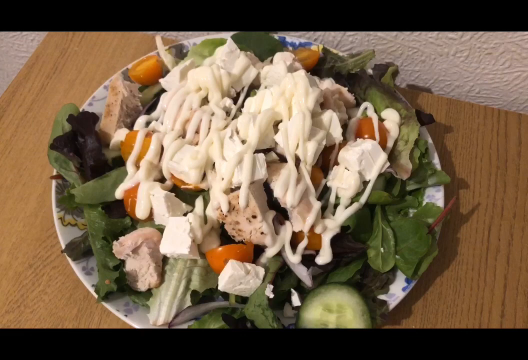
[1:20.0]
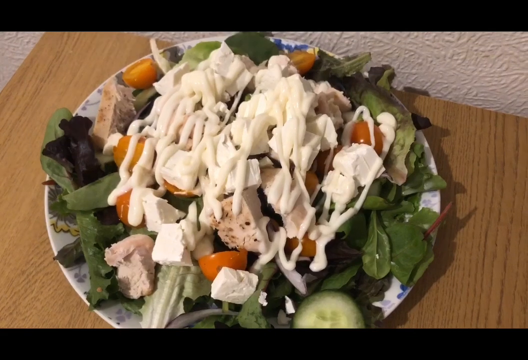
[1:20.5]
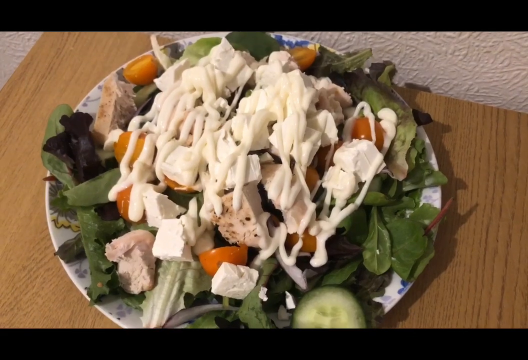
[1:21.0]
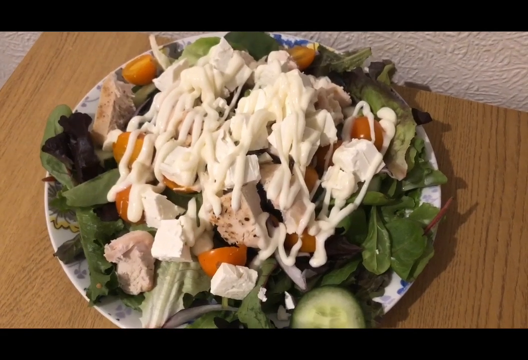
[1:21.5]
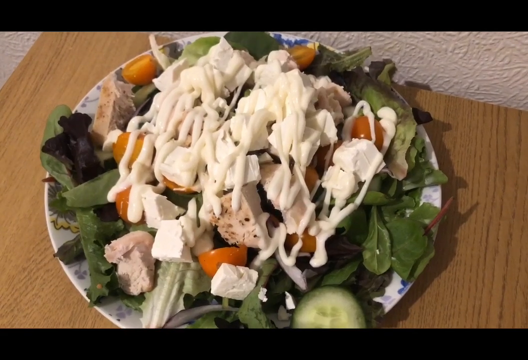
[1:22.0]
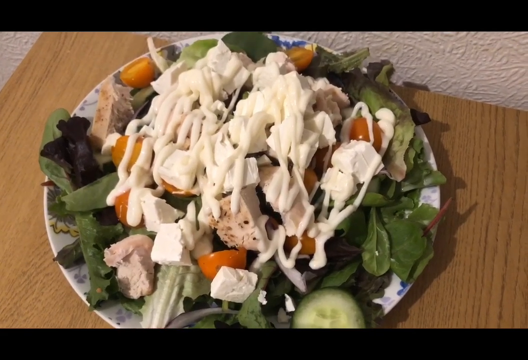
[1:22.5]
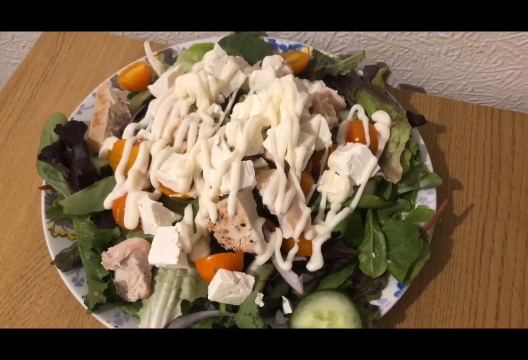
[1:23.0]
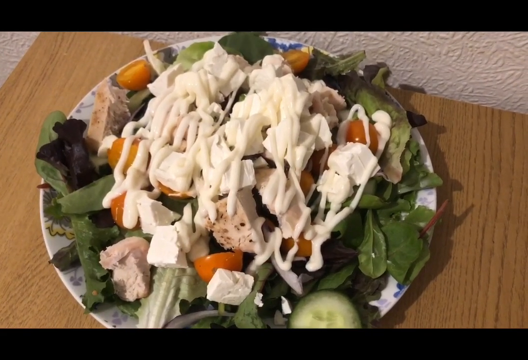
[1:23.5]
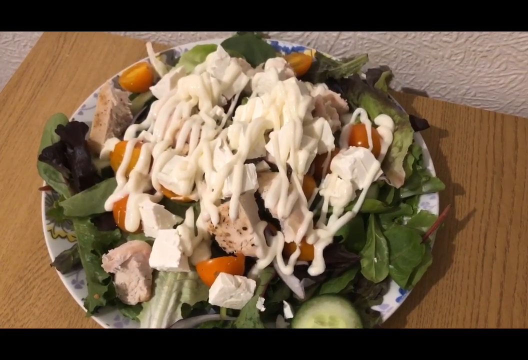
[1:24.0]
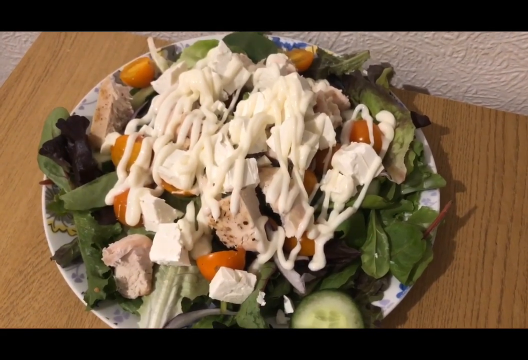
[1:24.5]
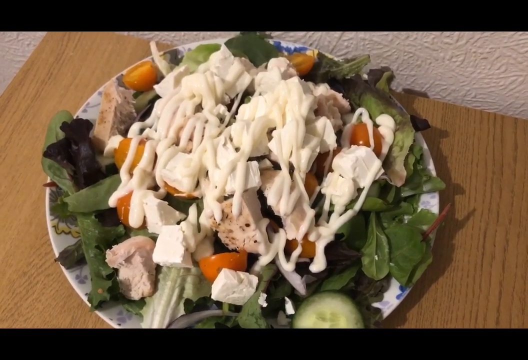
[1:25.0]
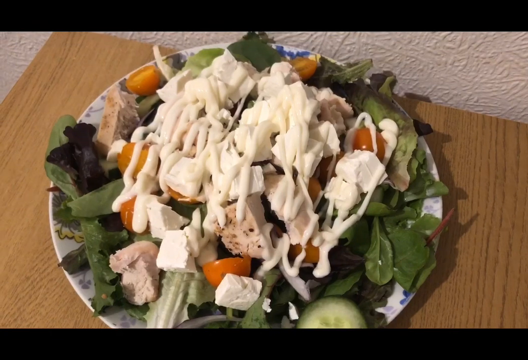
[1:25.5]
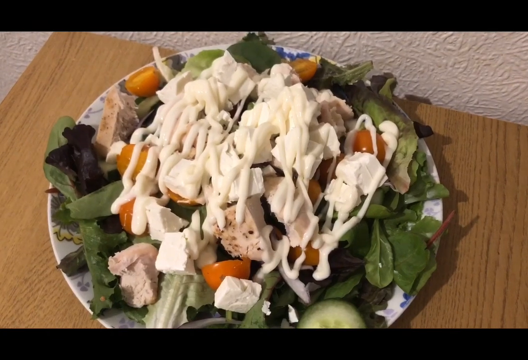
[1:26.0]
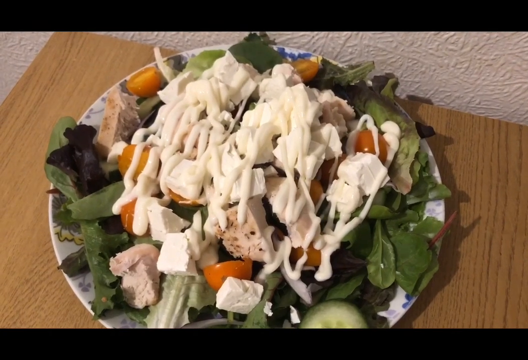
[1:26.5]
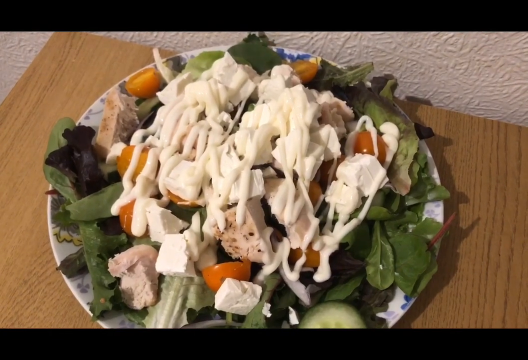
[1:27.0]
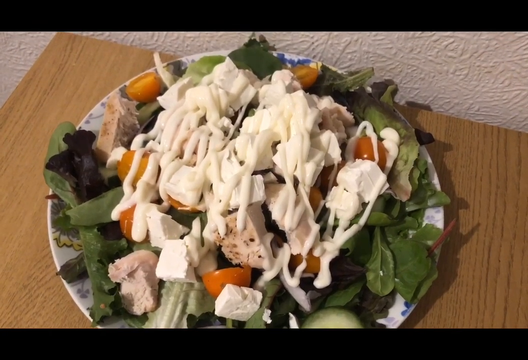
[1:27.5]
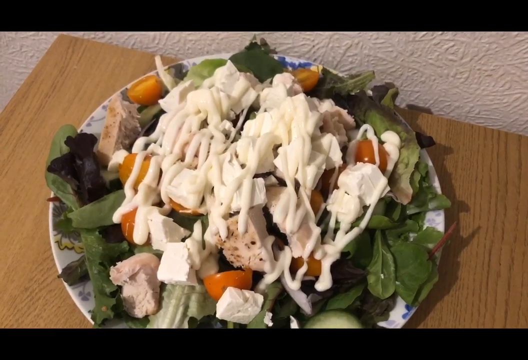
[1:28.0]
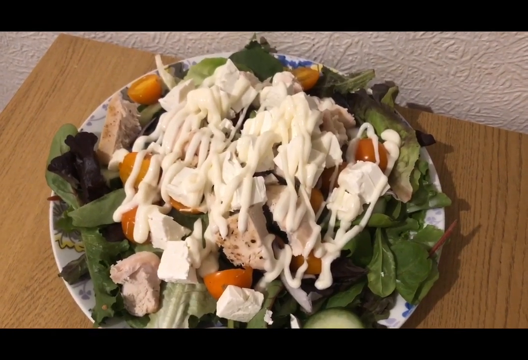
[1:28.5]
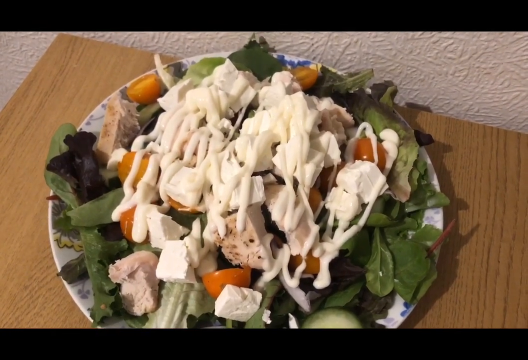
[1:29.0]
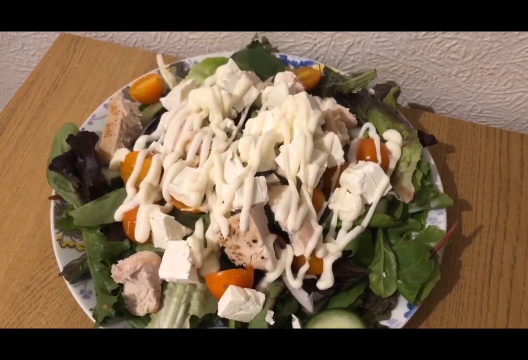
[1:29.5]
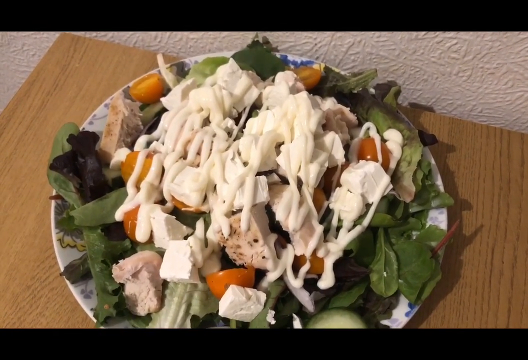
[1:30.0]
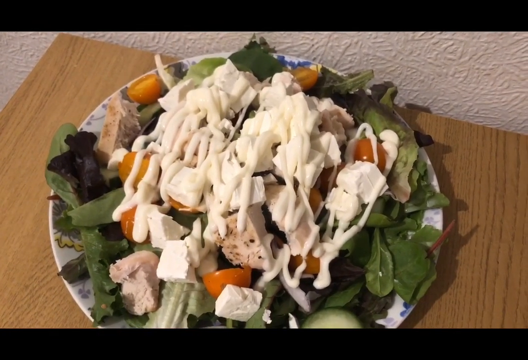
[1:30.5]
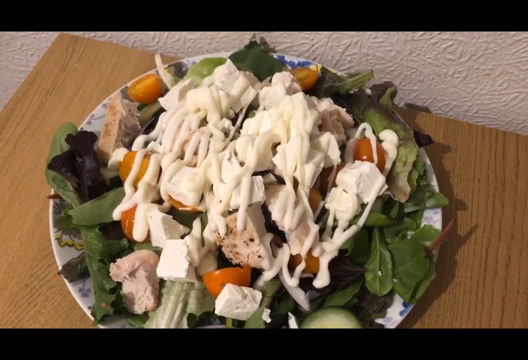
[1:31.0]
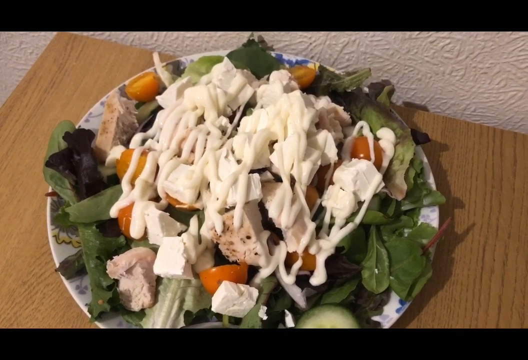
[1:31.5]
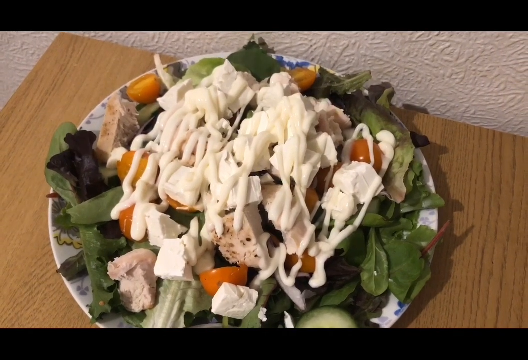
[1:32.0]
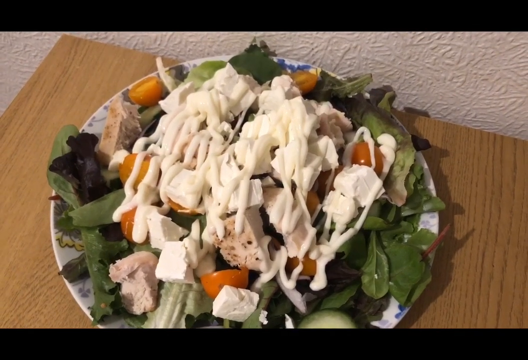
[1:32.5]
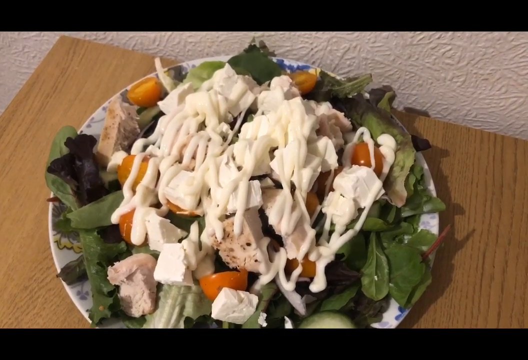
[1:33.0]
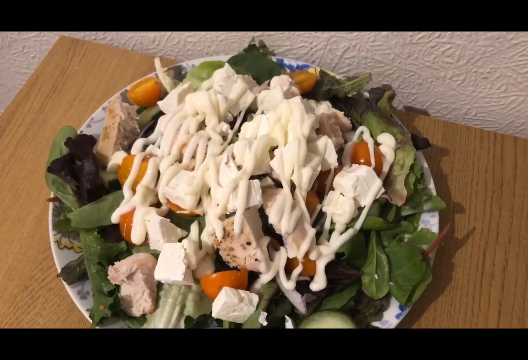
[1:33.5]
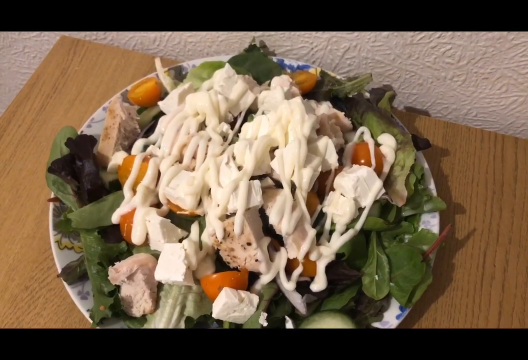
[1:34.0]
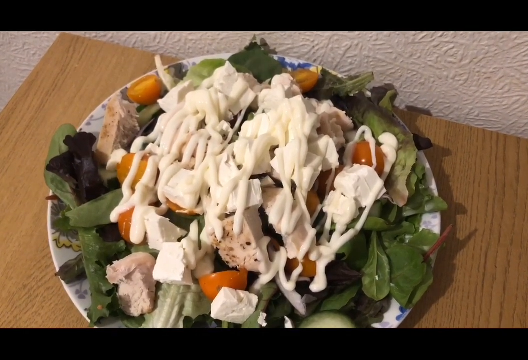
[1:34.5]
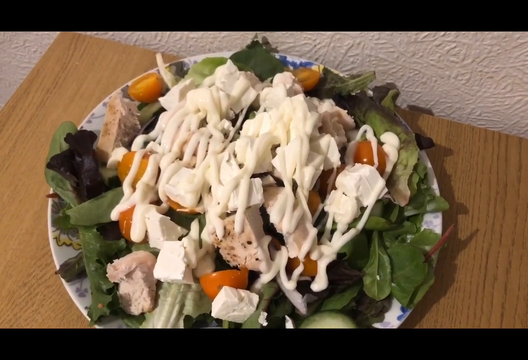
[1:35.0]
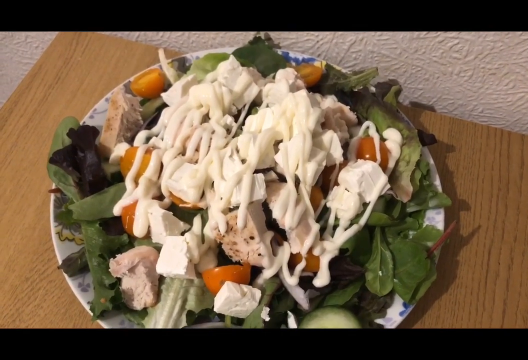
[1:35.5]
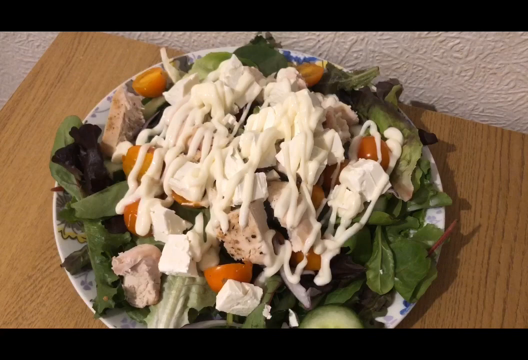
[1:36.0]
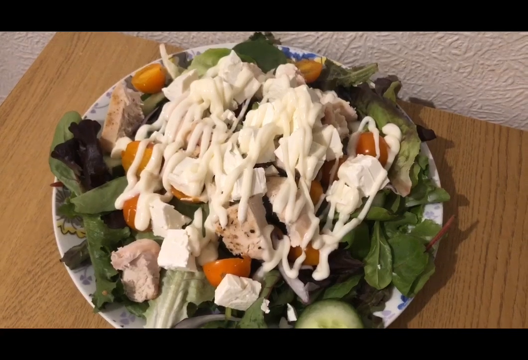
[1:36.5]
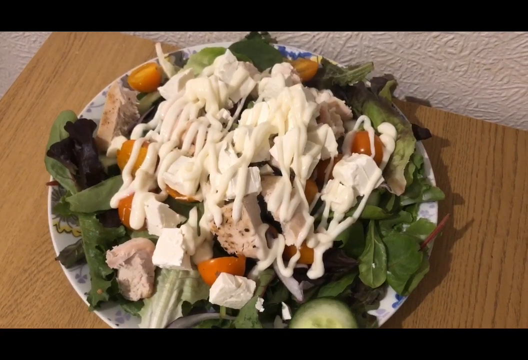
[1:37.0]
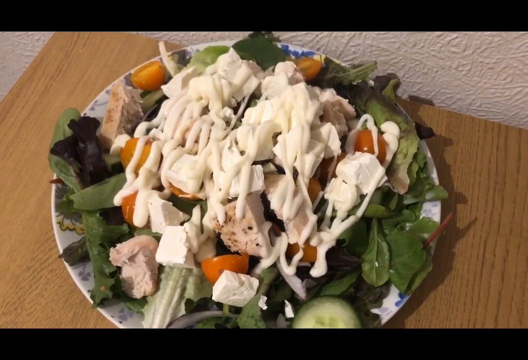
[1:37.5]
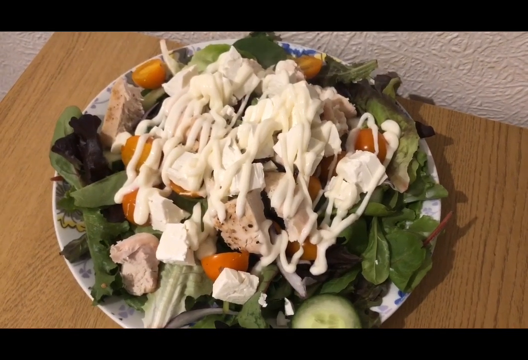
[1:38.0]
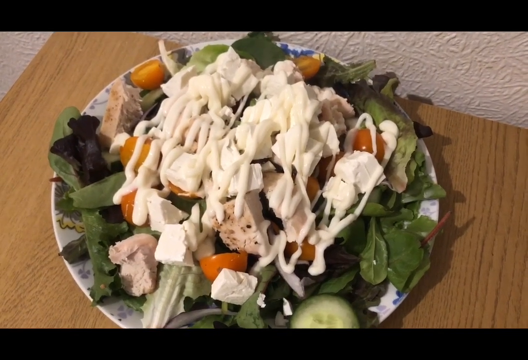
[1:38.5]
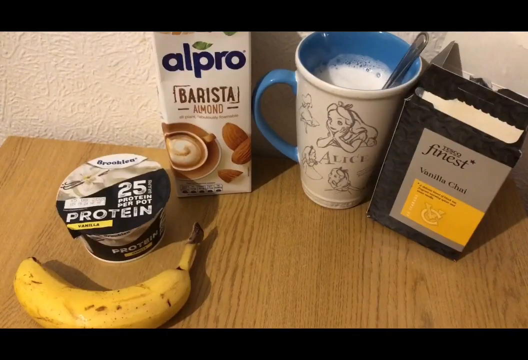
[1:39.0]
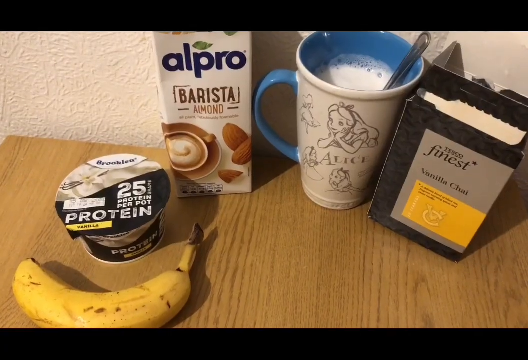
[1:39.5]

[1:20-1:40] A large plate is filled with salad: small green and dark green leafy greens with chopped chicken, halved orange cherry tomatoes, and small cubes of white feta cheese on top, with a generous drizzle of a thick white creamy sauce or dressing. The plate is on a light brown wooden table, with the textured white wall visible near the top of the screen. The person looks to be standing in front of the table, filming down at the plate. After a few seconds the screen changes to the same table: on the right is a small black box with a grey rectangular box on the front that says "Finest Vanilla Chai." To its left is a tall cream-colored mug with a brown outline picture of Alice from Alice in Wonderland and the name "Alice" underneath; it looks filled almost to the top with a white creamy beverage, has a spoon inside, and has a blue interior and blue handle. To the left of that is a tall rectangular white container that says "Alpro" in dark blue font and "barista almond" in brown letters, with pictures of brown almonds on the front. In front of that is a cup of yogurt with its lid on, half silver and black, saying "Brooklea, 25 protein per pot," and a yellow banana lies in front of it.